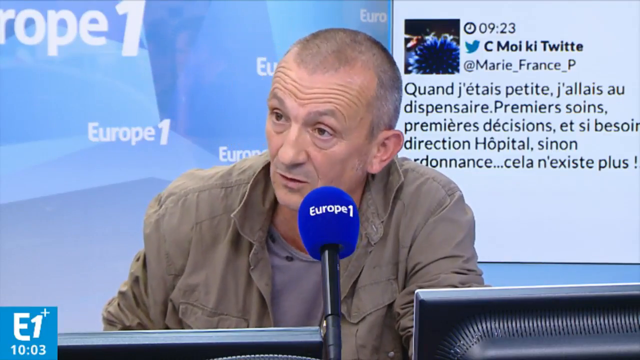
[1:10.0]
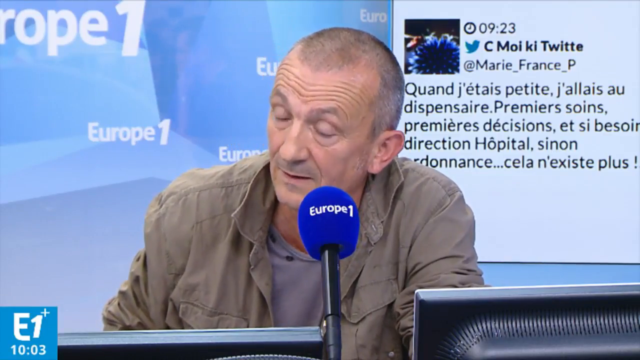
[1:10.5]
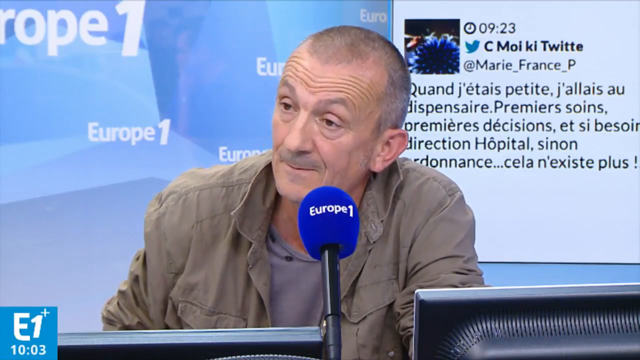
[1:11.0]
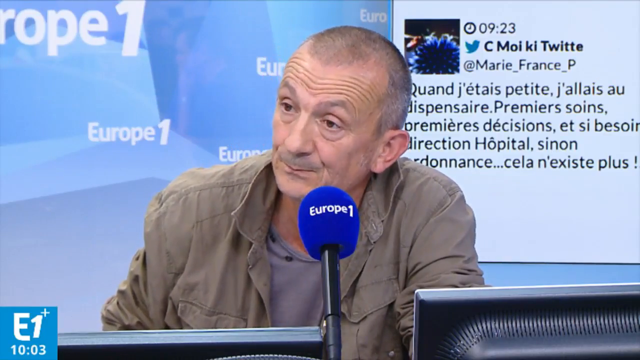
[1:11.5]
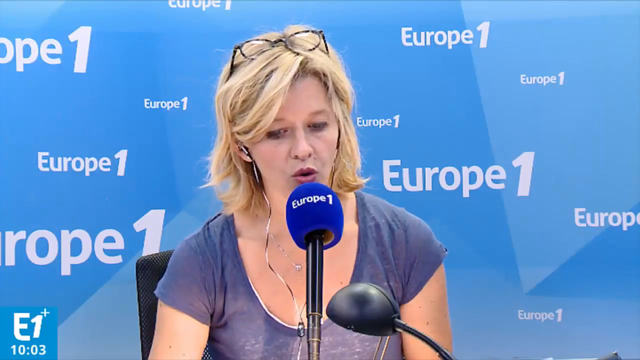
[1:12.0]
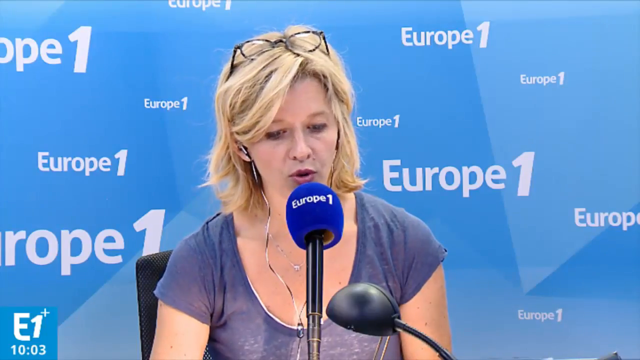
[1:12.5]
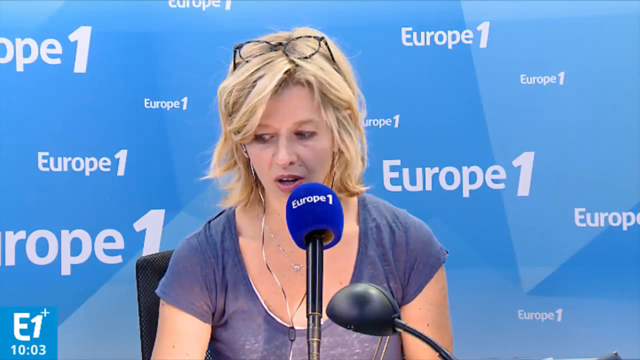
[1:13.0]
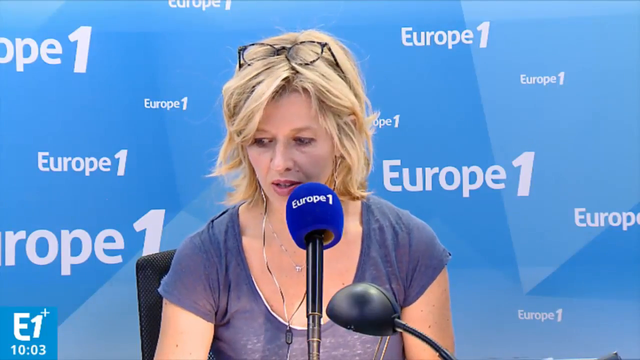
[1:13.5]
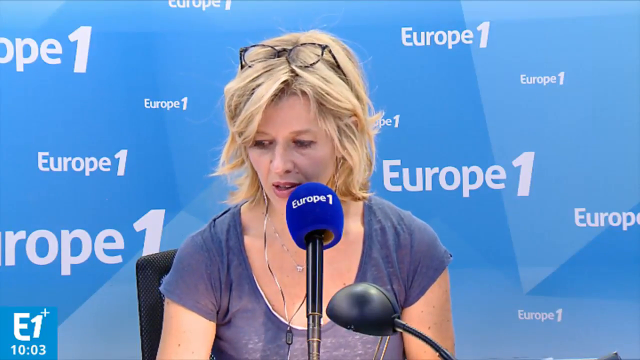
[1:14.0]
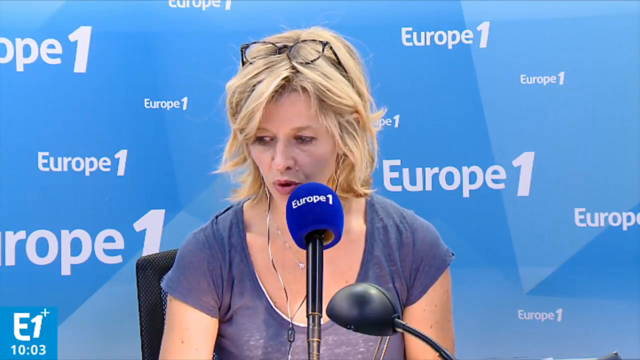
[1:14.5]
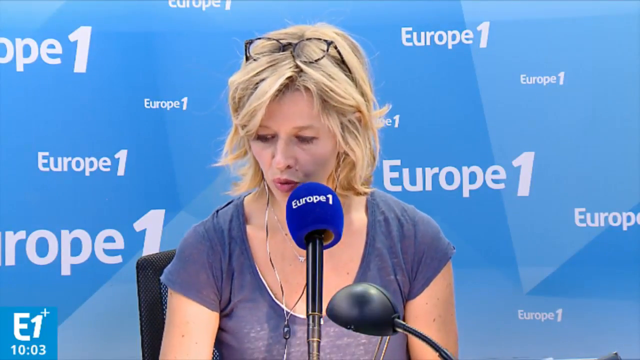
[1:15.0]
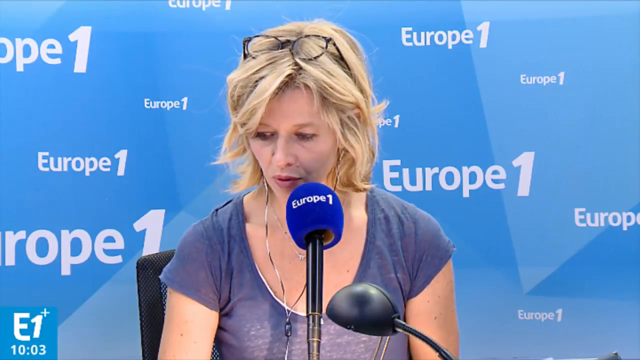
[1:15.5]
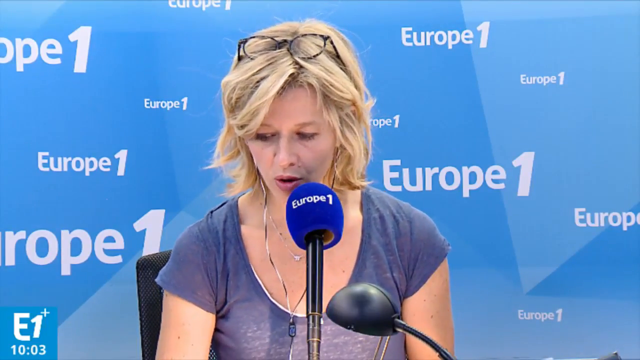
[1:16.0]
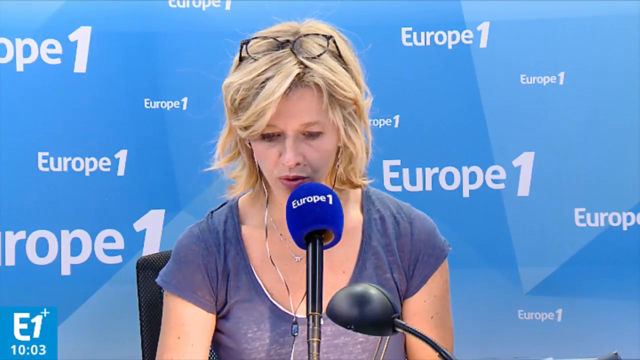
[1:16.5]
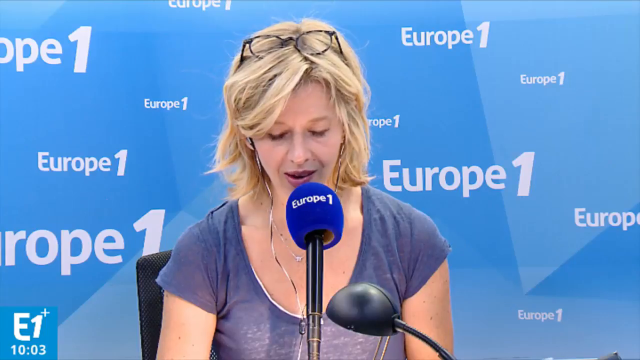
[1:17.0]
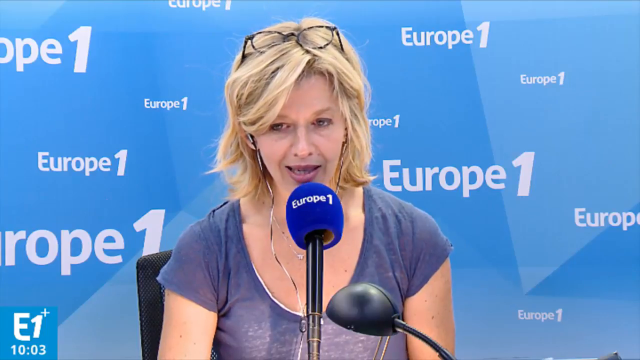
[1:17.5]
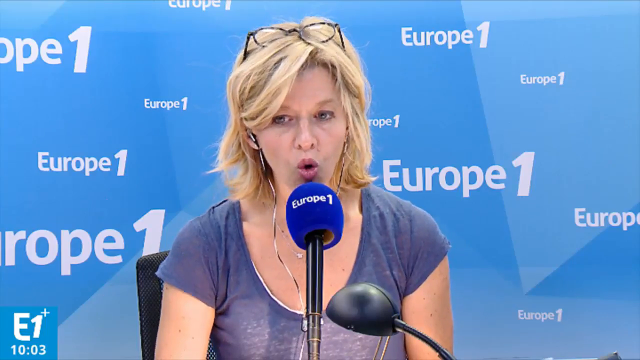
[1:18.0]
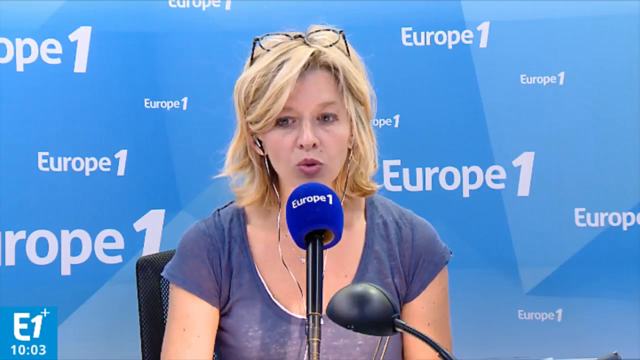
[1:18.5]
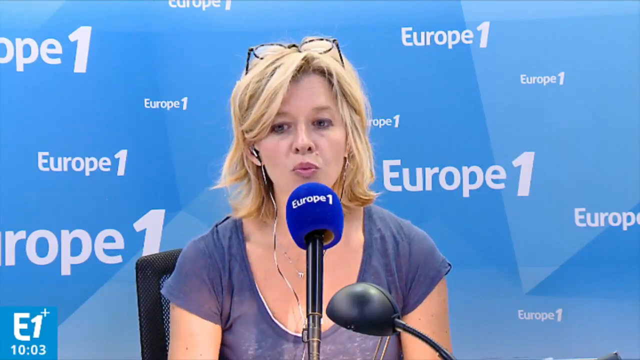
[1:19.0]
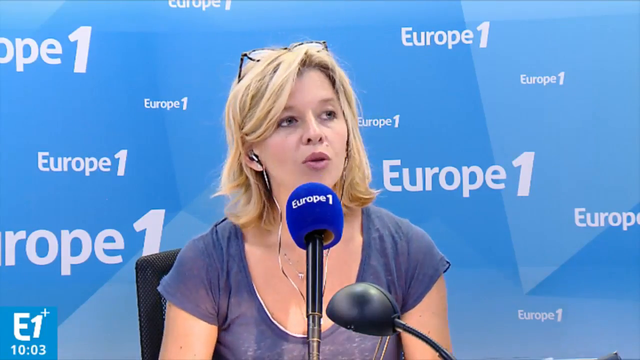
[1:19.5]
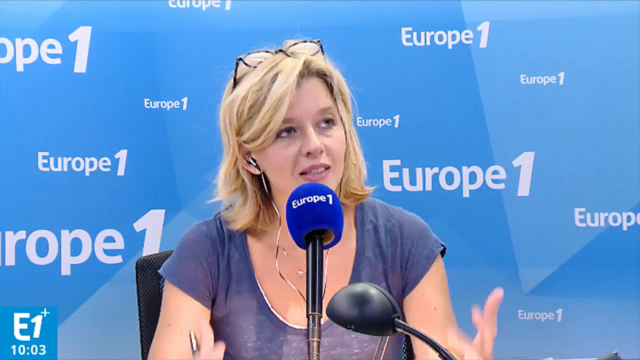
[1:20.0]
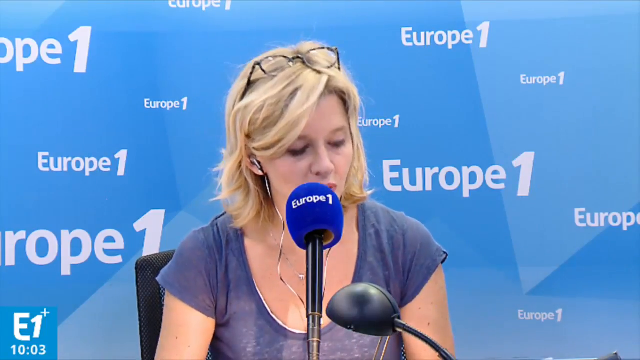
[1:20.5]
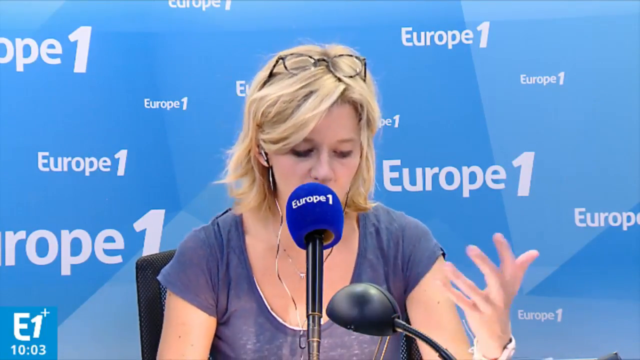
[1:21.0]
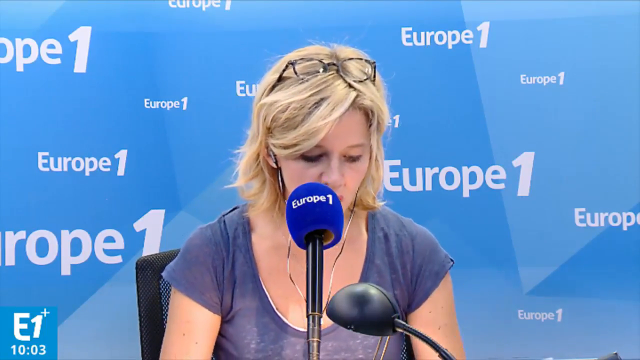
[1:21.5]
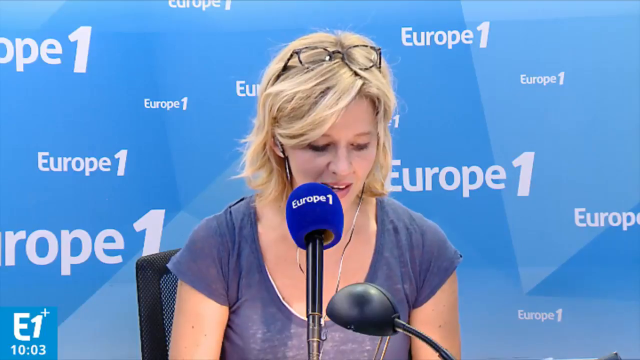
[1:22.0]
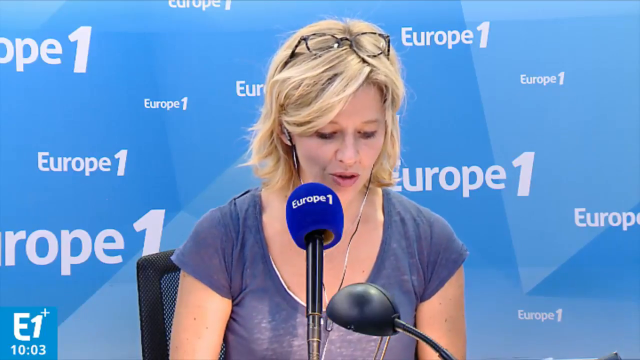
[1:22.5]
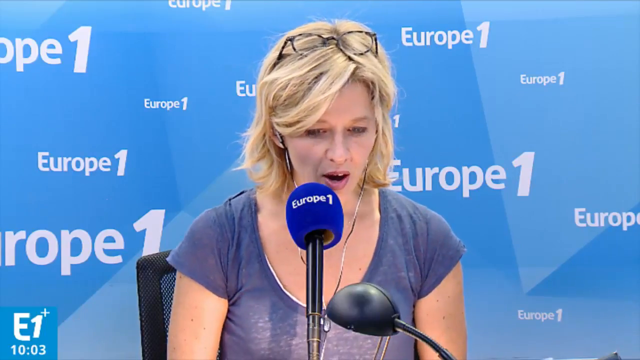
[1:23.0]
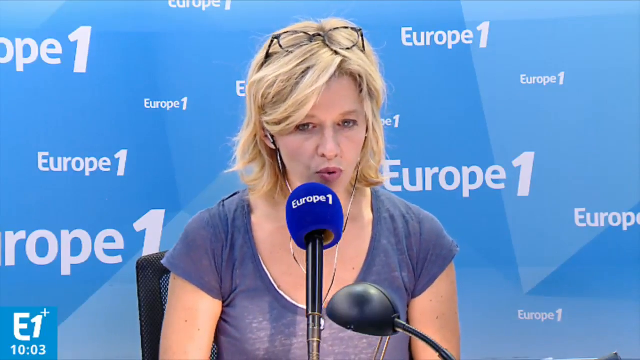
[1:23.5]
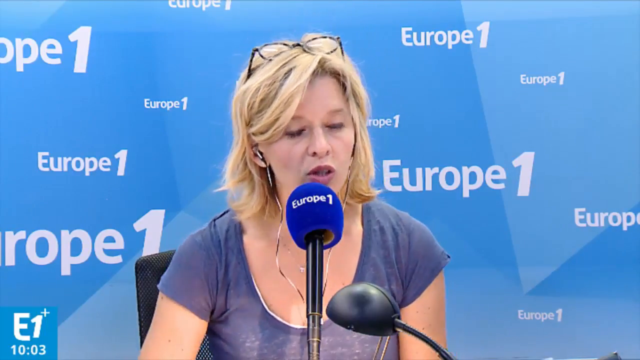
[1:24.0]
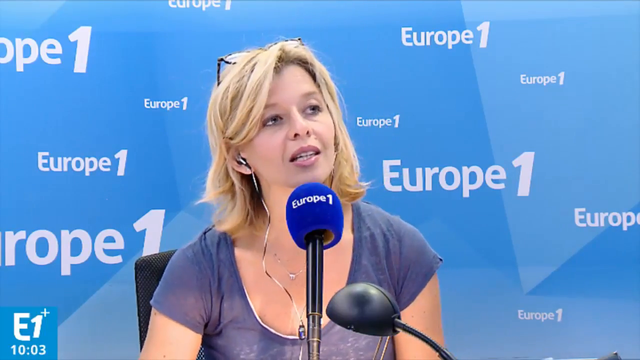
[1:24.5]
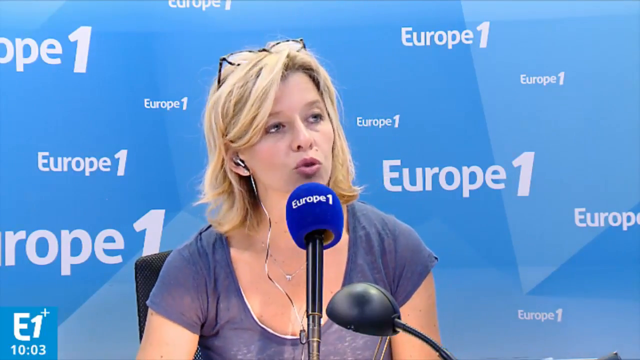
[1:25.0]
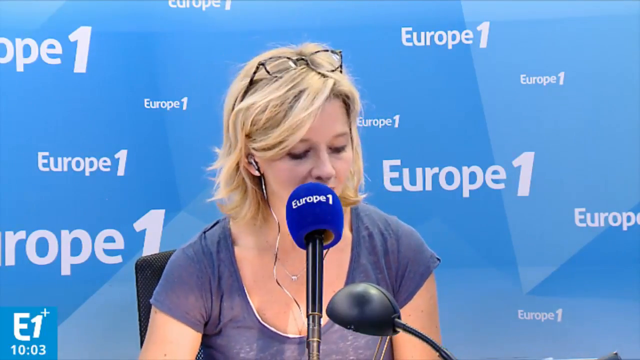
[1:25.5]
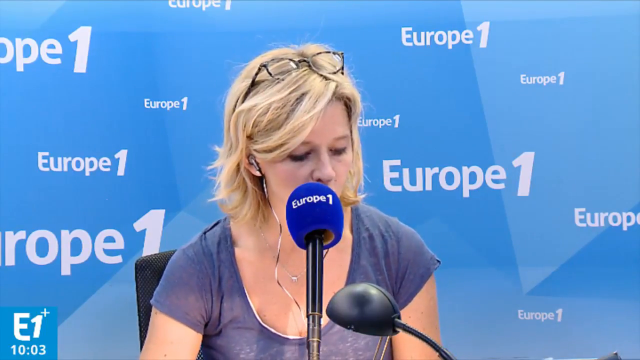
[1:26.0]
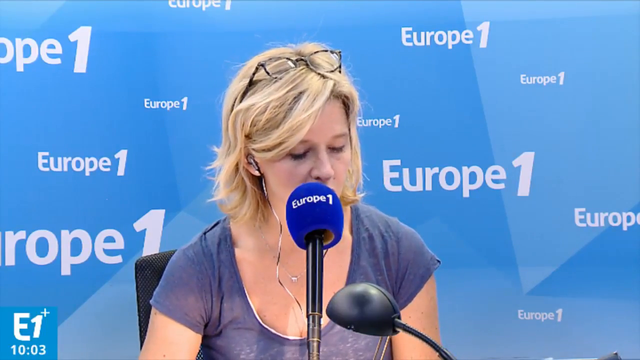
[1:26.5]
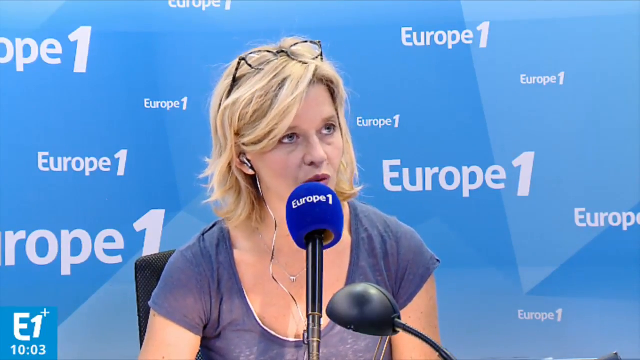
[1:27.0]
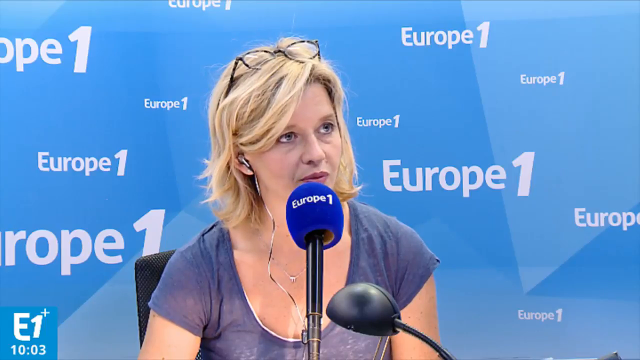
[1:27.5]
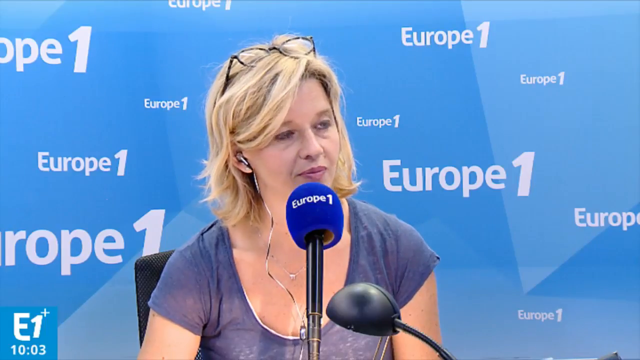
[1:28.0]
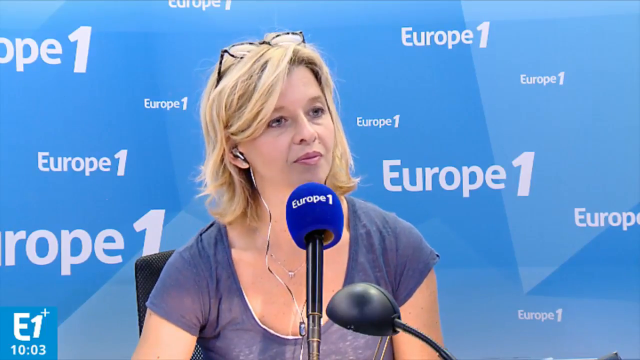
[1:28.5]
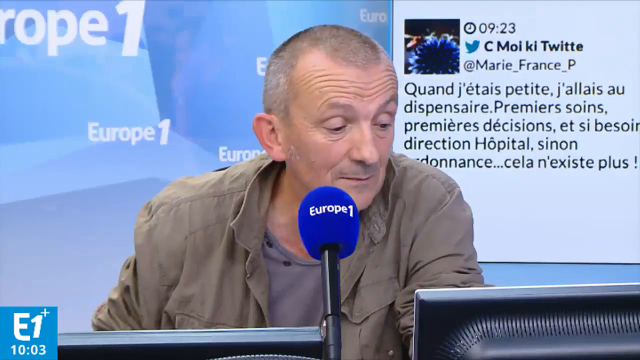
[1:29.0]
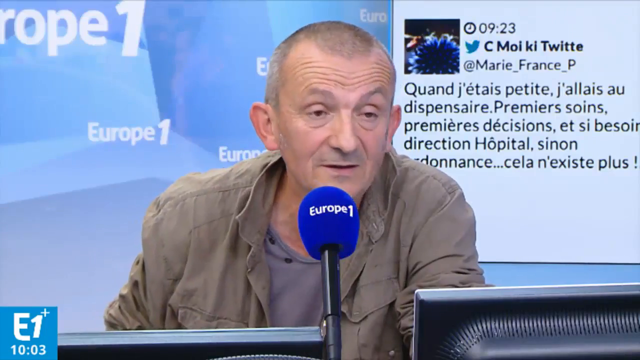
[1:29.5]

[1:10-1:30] The woman is now fully visible. She has spectacles with strings on top of her head. She is young, wears light makeup, a t-shirt and a necklace, and she is interviewing the old man. Behind her is a paper or wallpaper with "Europe 1" written on it, so they appear to be in a studio. Both keep talking and use a lot of hand gestures. The woman tries to maintain eye contact while the old man looks aside. She kind of looks like she is blaming him, and he does not seem to understand what she is saying.